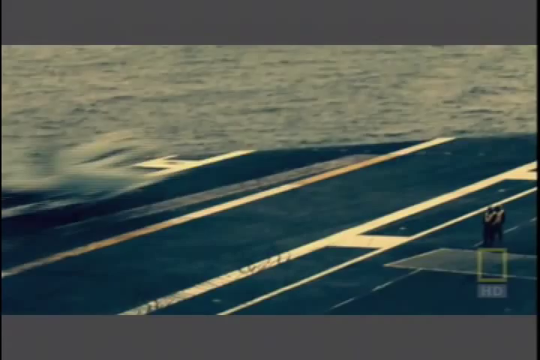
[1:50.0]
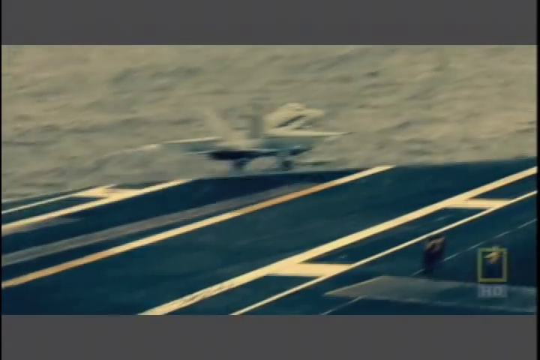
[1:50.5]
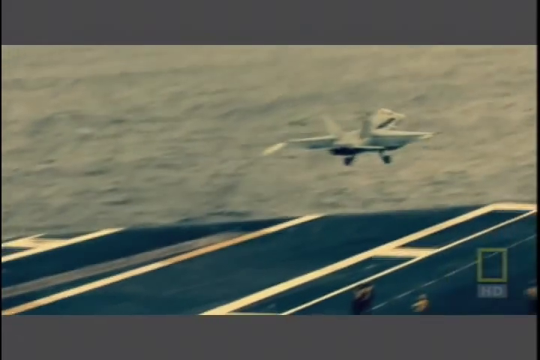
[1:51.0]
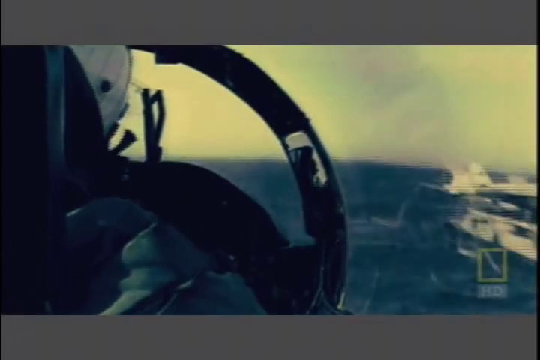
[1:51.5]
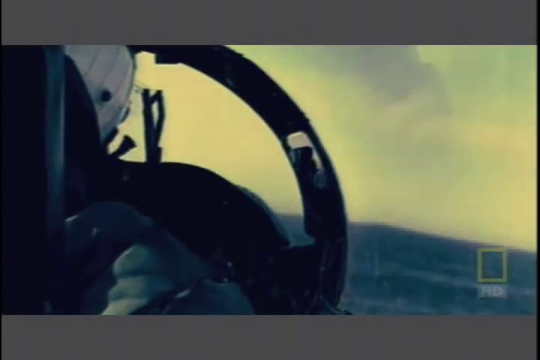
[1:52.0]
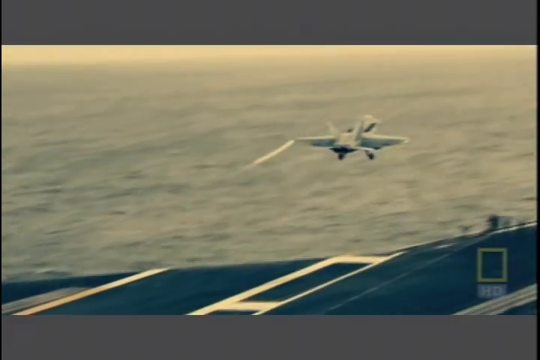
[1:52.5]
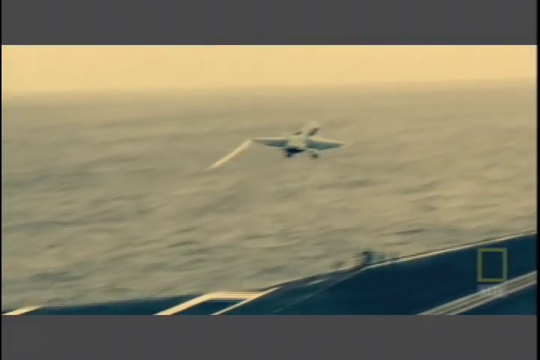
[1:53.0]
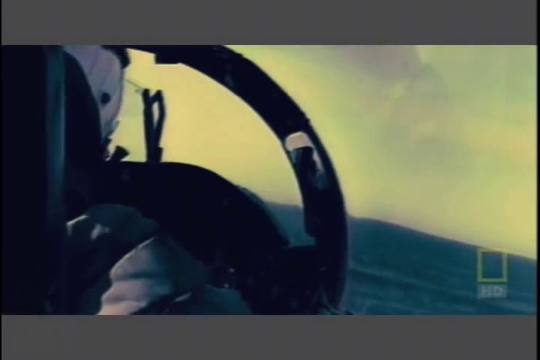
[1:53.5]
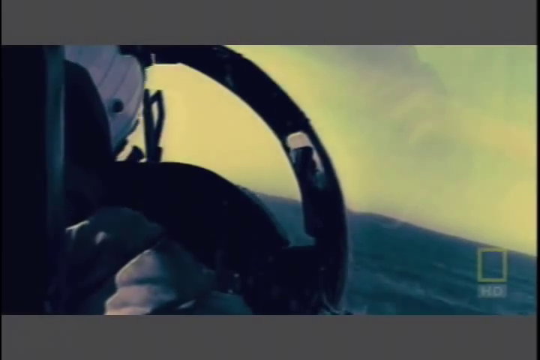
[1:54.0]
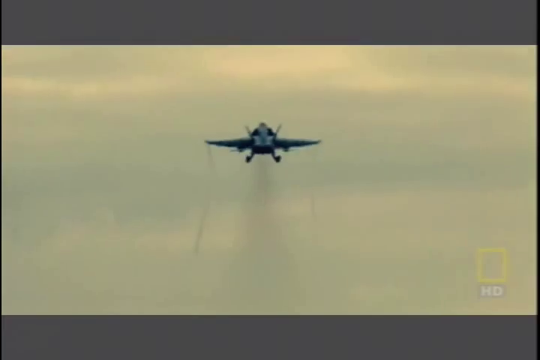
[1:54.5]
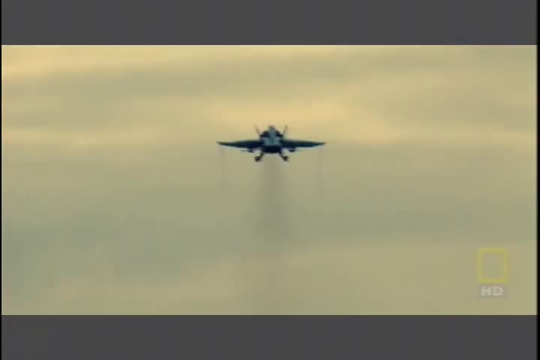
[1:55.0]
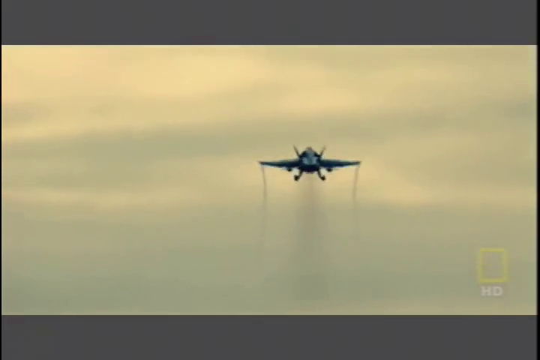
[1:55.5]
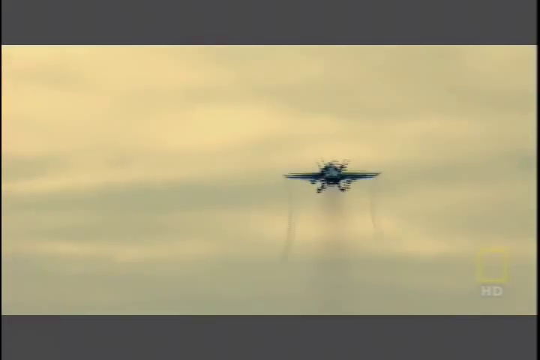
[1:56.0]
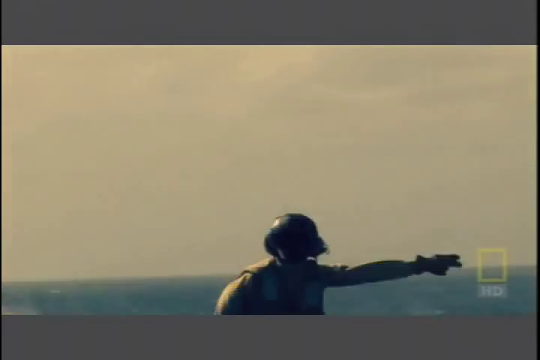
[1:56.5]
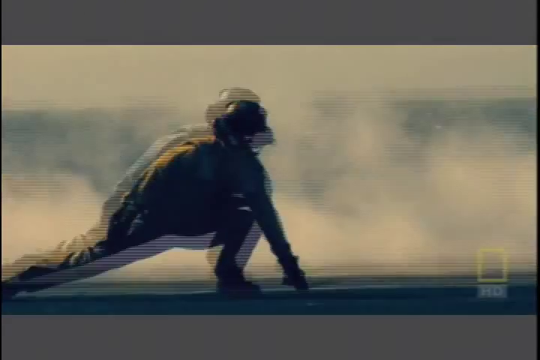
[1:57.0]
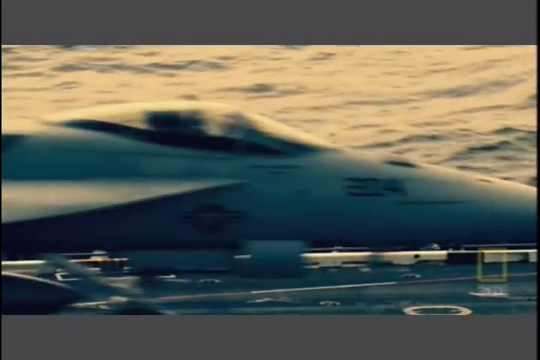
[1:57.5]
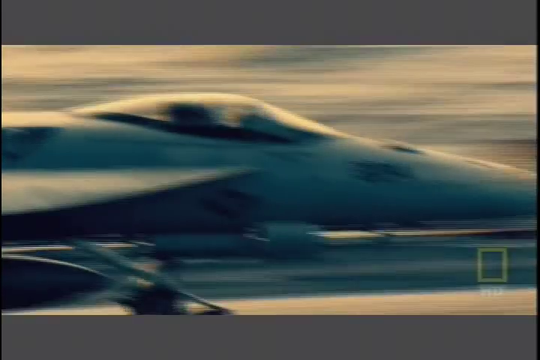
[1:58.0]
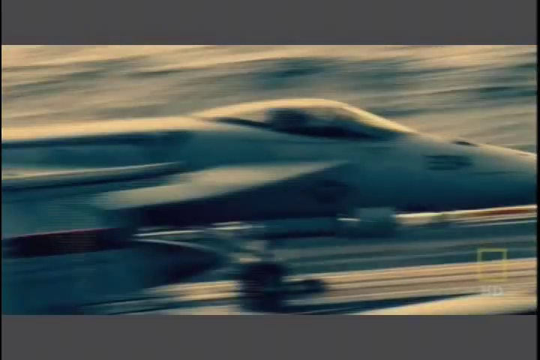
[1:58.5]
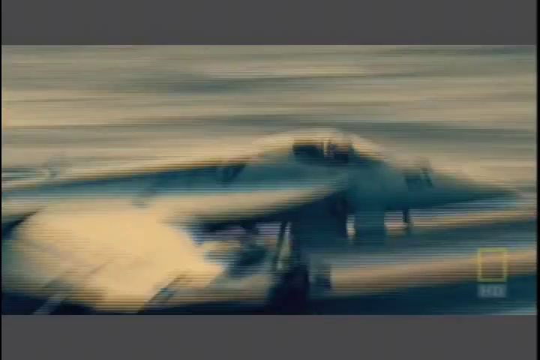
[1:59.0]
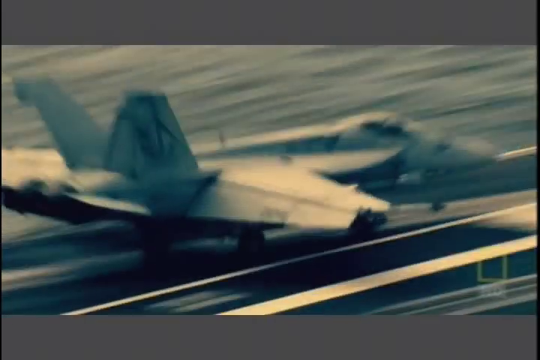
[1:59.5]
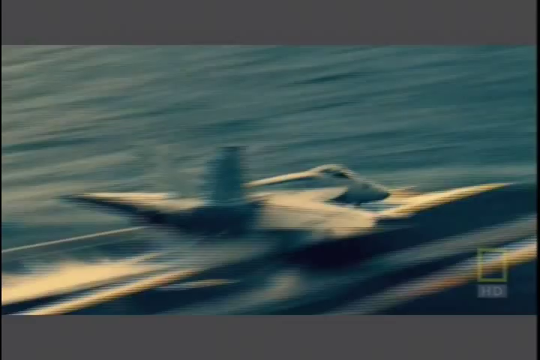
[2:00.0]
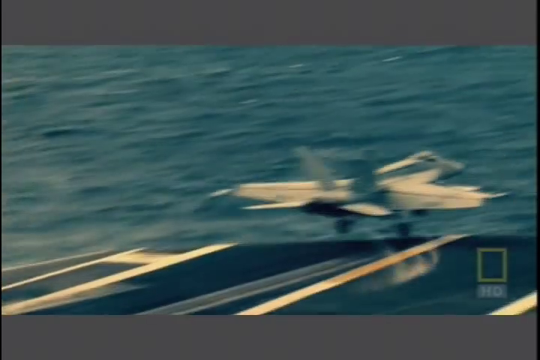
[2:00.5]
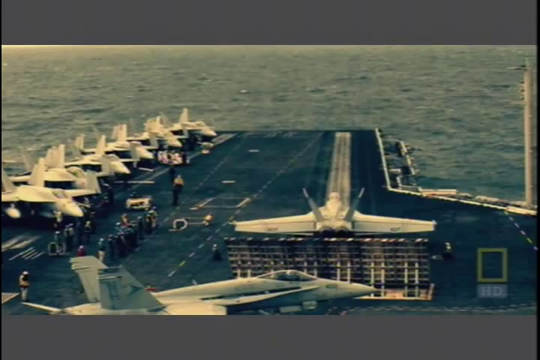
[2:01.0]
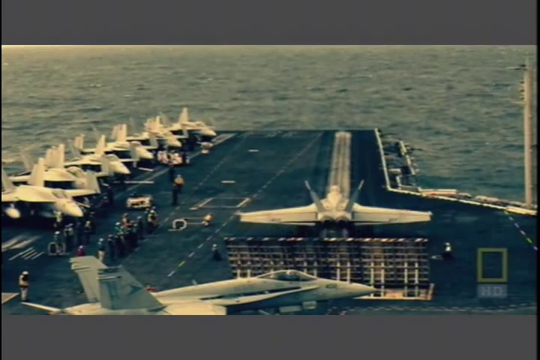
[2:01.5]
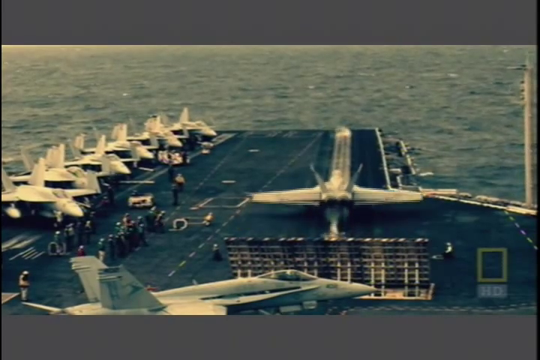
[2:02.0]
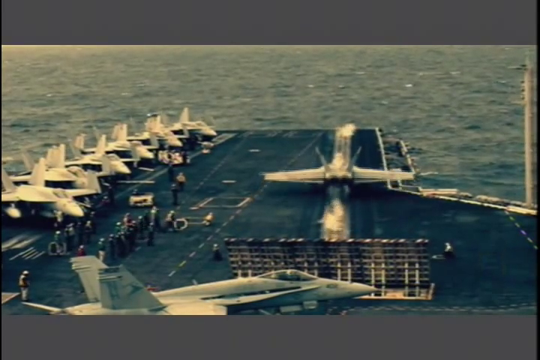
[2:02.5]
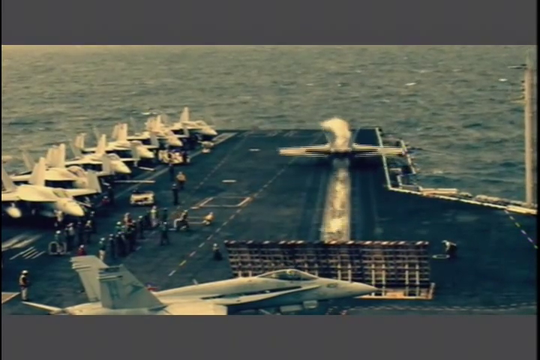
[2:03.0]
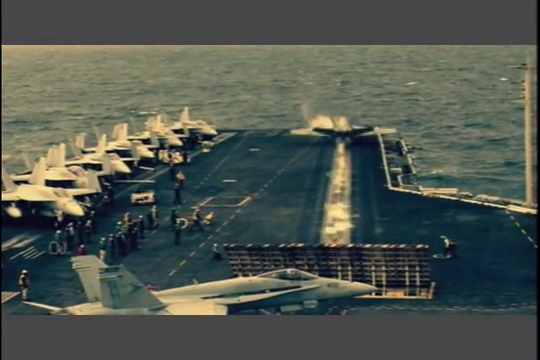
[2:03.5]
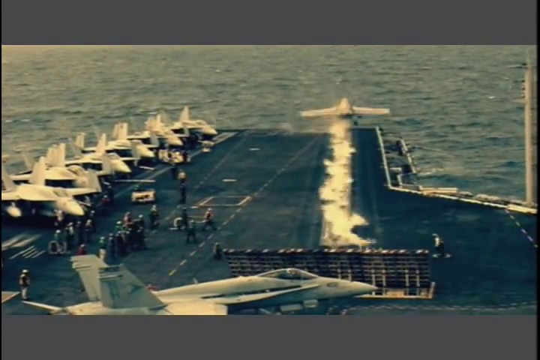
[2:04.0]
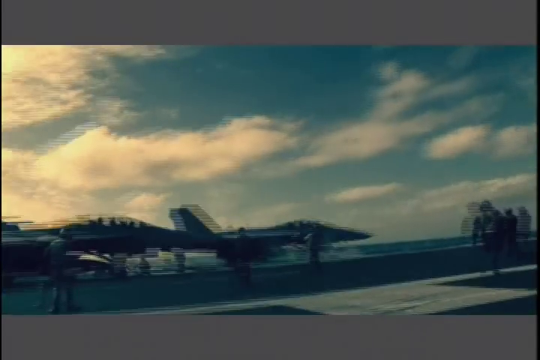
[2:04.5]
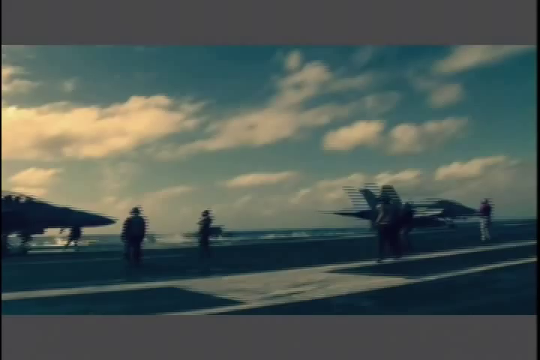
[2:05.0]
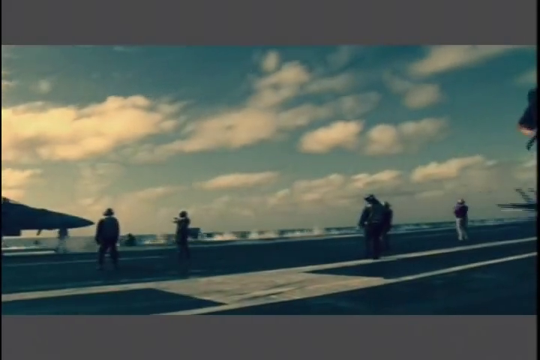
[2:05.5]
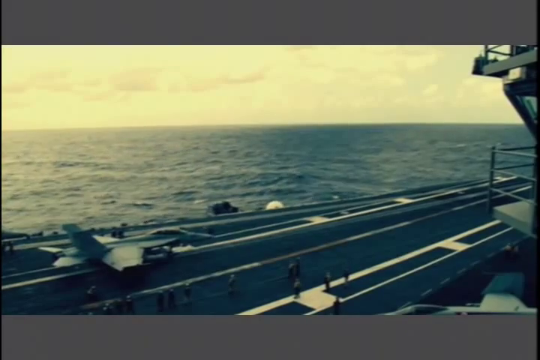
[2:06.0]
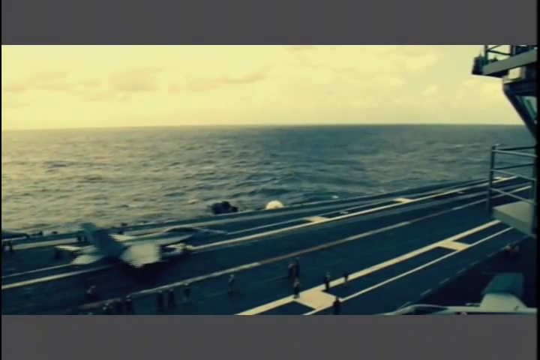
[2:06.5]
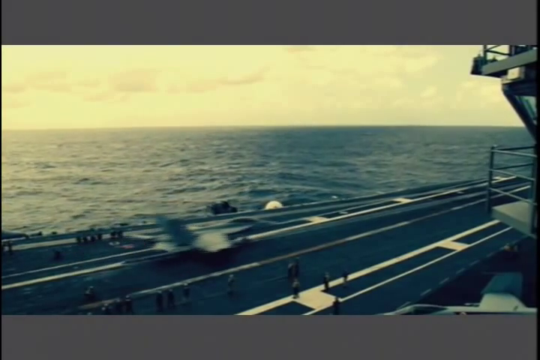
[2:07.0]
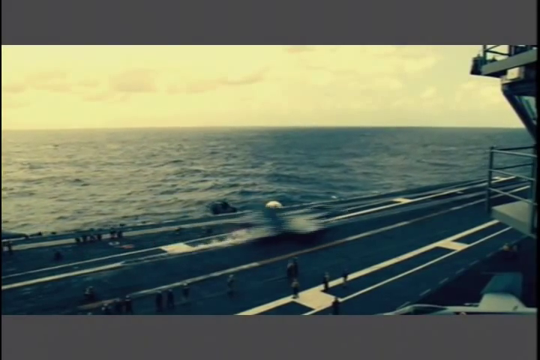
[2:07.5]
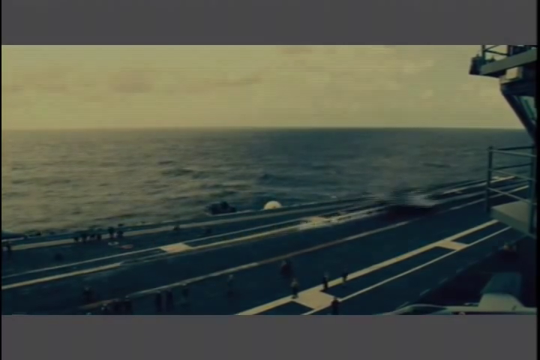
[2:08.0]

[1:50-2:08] An aircraft takes off from the flight deck of an aircraft carrier out in the ocean. The deck is black, marked with yellow lines, and the ocean is in the background. The video is in dull grey colors, though colors like yellow are still visible. As the aircraft takes off, there is a brief view from the pilot's cockpit out through the window. The aircraft is then seen again as it flies, followed again by a view through the pilot's windshield, and again the aircraft flies against grey skies. It is a fighter jet with one pilot, with a trail of smoke behind it. Next, the controller on deck gets into position to guide another aircraft to take off. The aircraft takes off from the flight deck with smoke behind it, seen from the side as it goes off the deck.